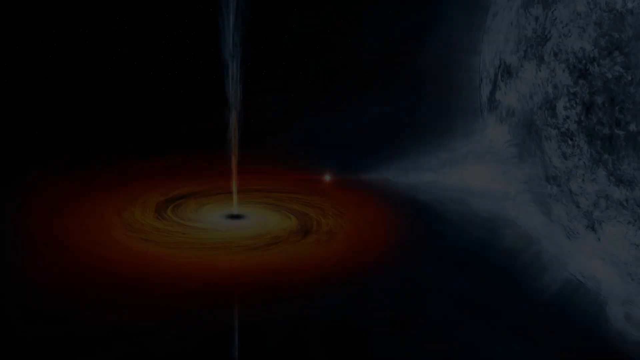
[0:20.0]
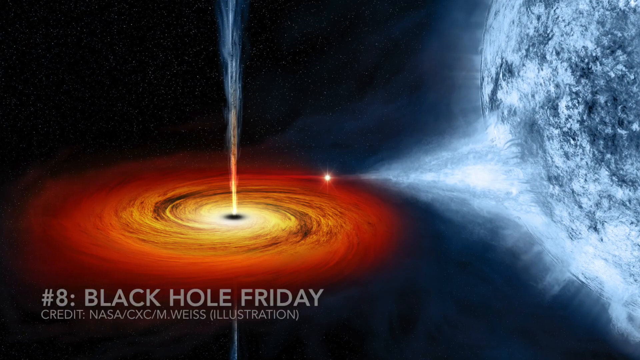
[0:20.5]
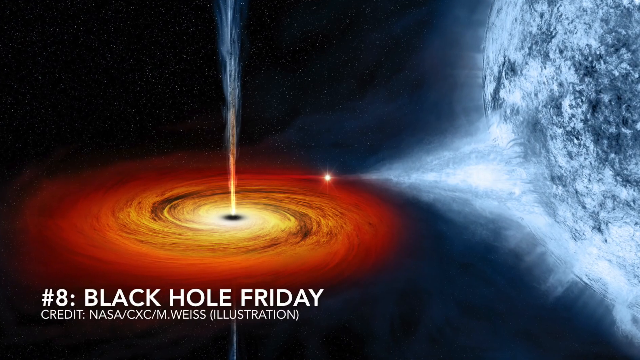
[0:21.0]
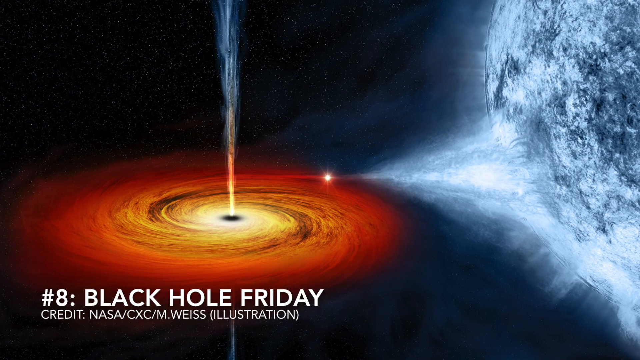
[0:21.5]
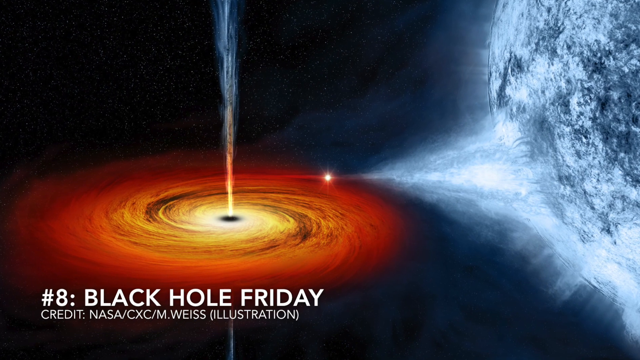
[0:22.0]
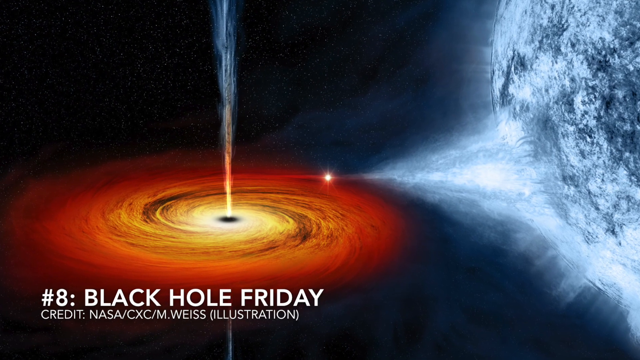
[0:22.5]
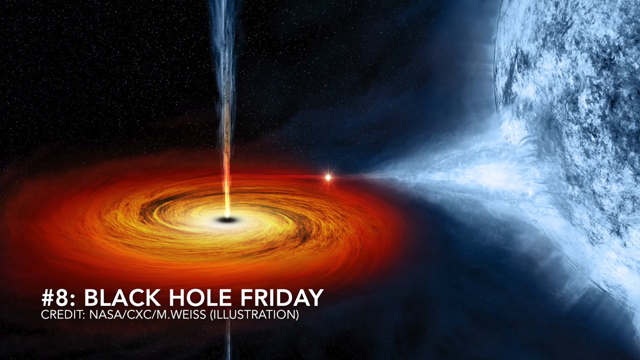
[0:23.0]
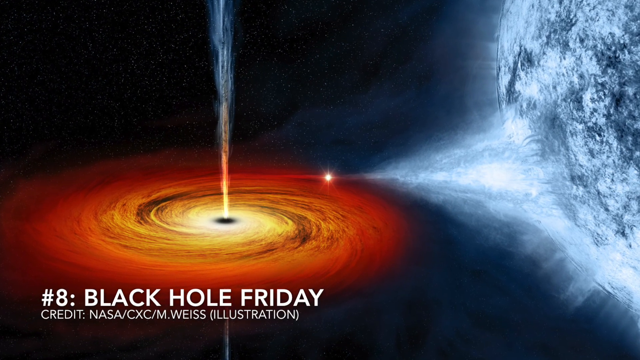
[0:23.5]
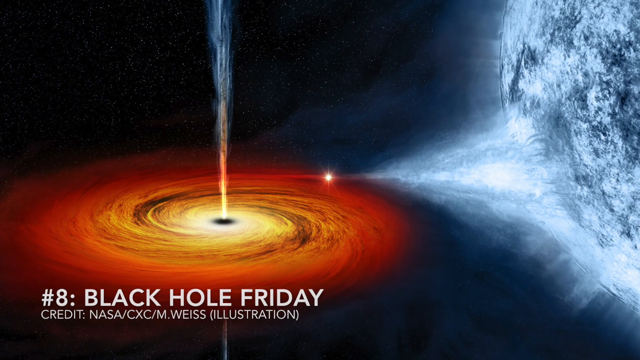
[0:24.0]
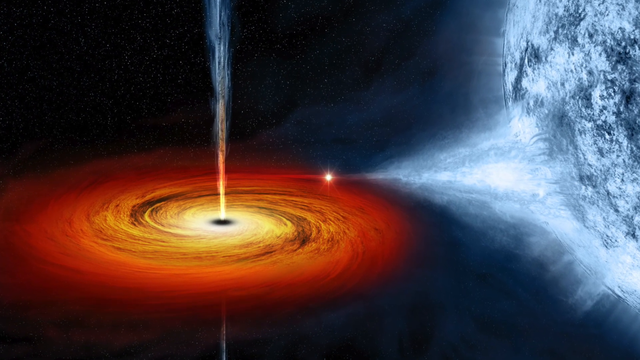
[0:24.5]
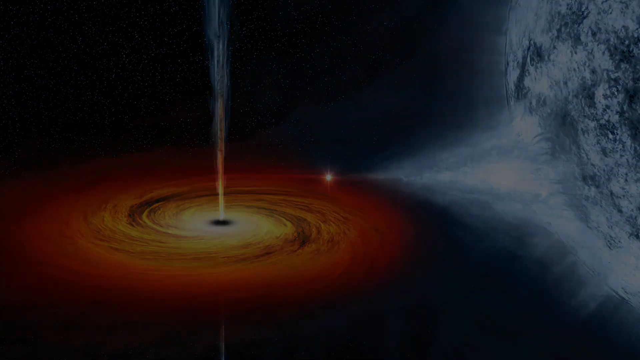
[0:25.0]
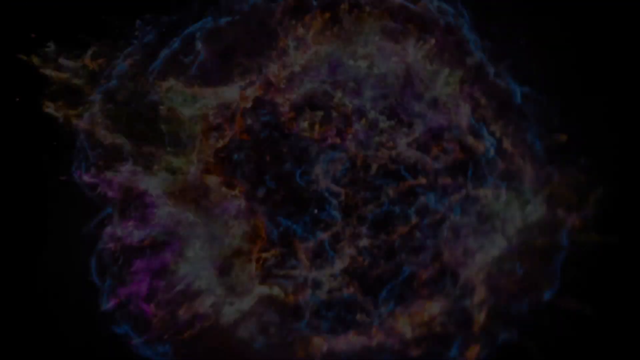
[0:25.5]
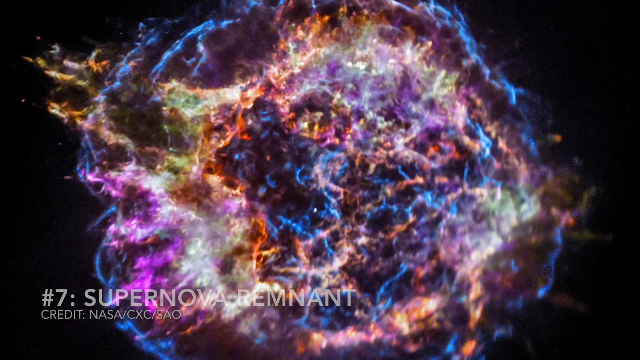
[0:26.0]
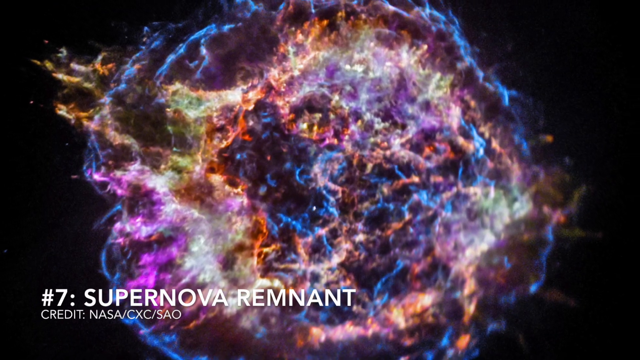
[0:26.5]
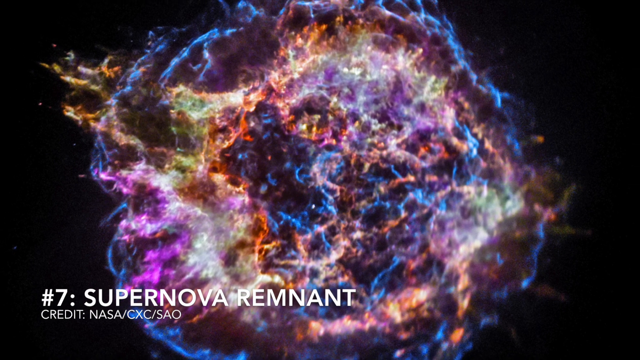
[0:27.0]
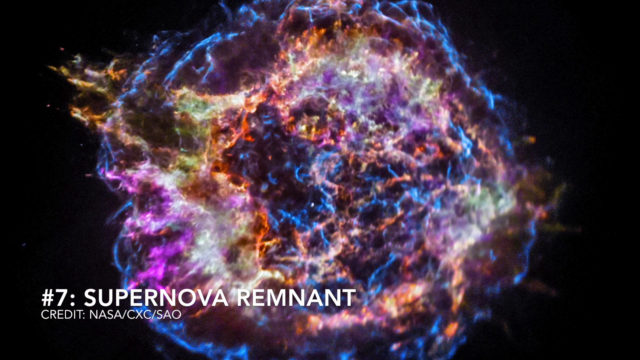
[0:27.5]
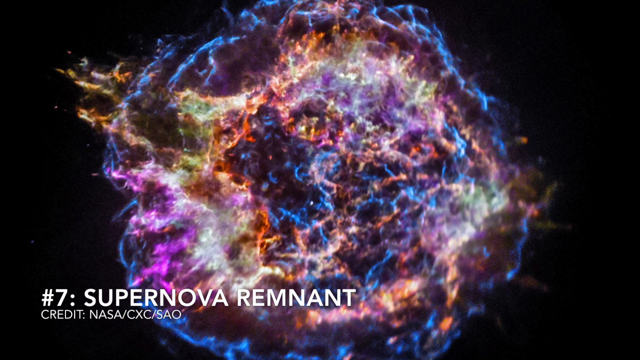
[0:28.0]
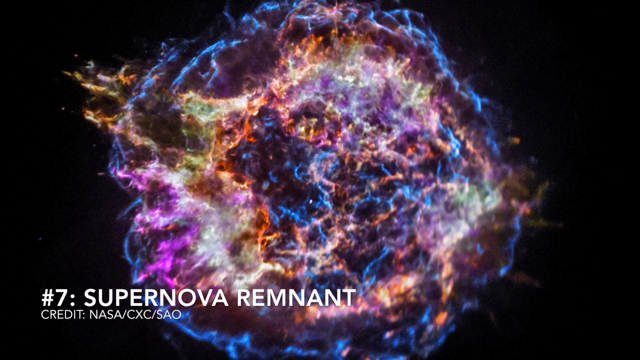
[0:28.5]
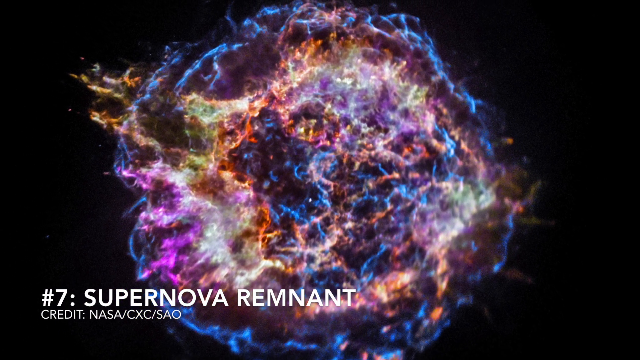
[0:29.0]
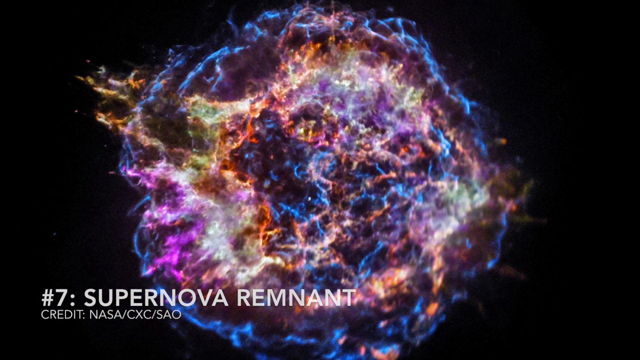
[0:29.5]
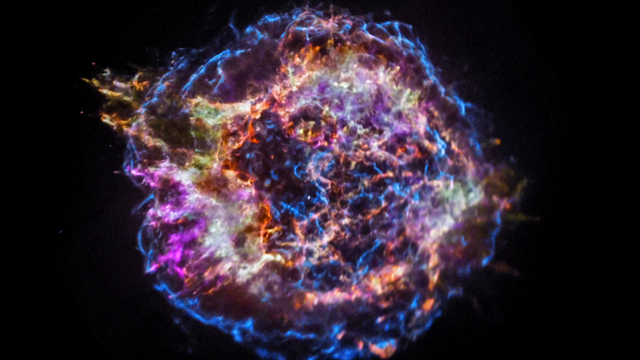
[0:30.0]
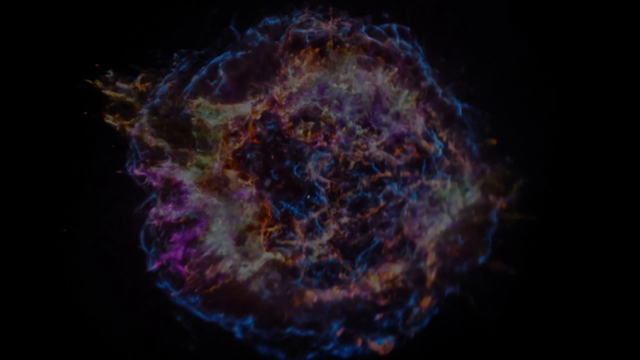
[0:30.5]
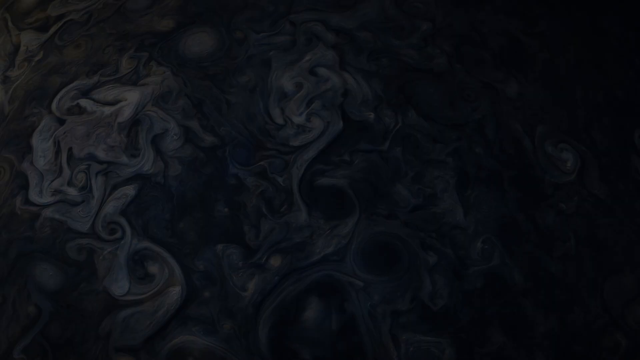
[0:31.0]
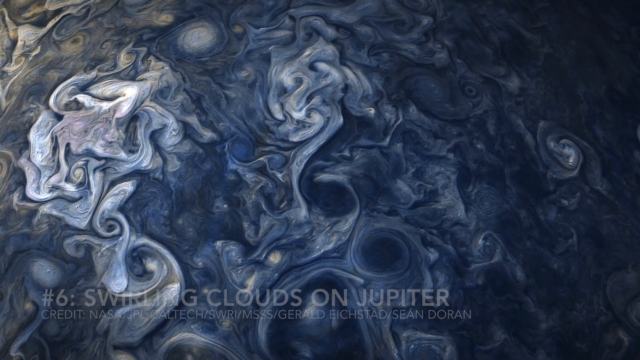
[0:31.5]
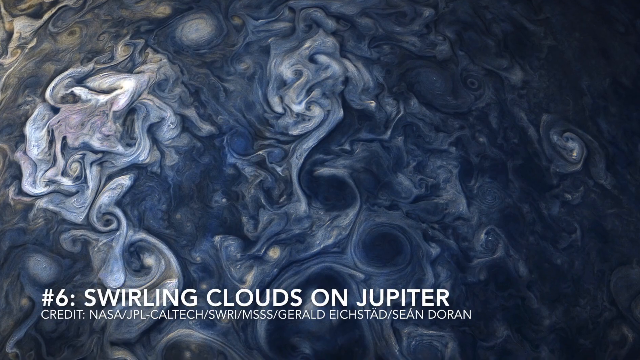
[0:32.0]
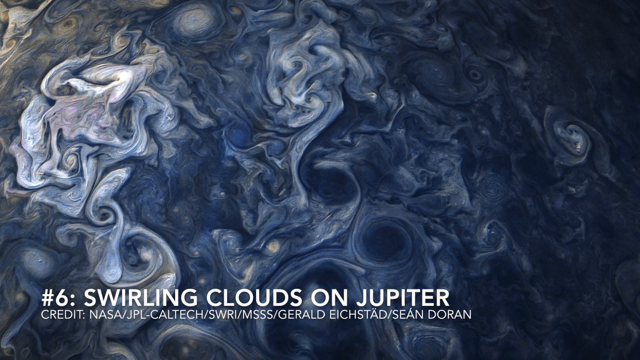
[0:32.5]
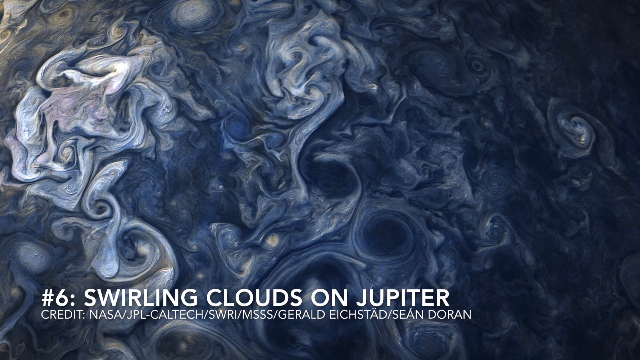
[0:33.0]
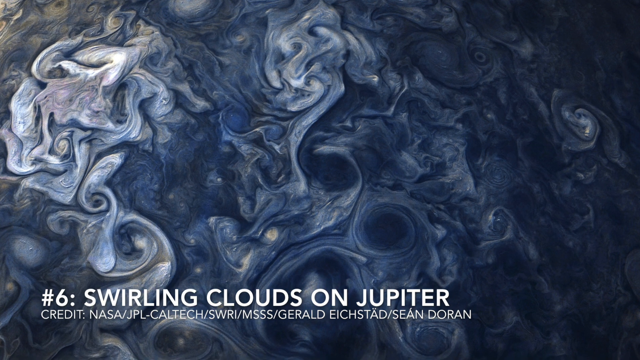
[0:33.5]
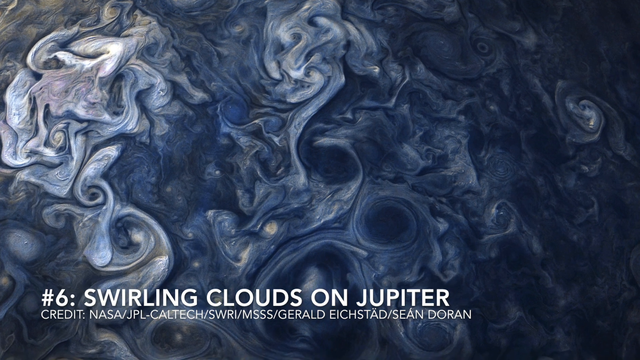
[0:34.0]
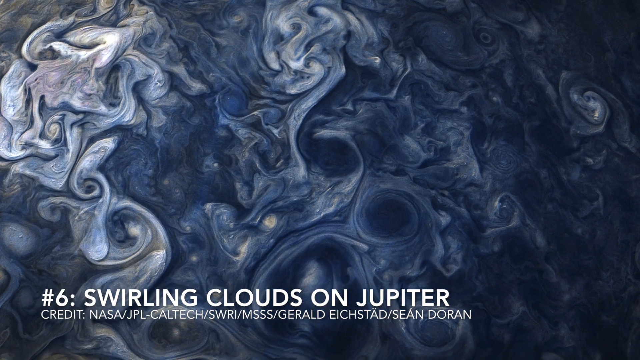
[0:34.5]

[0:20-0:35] Number 8, "Black Hole Friday", appears in the bottom left corner. The image shows red spiraling into yellow with a black hole in the middle, and coming out of it is a band of yellow, then red, then blue, somewhat like a swirl. Toward the right-hand side, a big streak of blue and white comes from a point, and in the upper right corner there is what looks almost like a big stone. Next is number 7, "Supernova Remnant", which looks somewhat like a crumpled opal, with blues, purple, red and yellow seemingly tangled together on a black background. Then comes number 6, "Swirling Clouds on Jupiter", a blue and white swirl that almost looks like white paint swirled all through a blue substance.